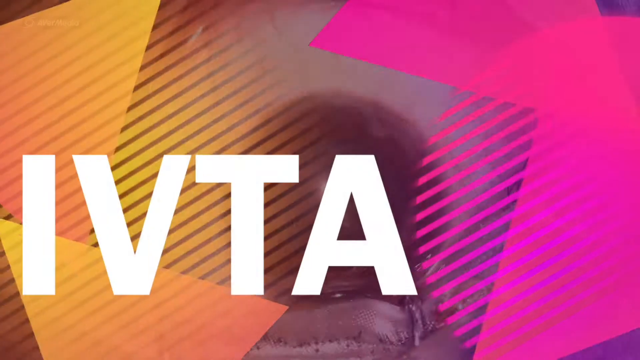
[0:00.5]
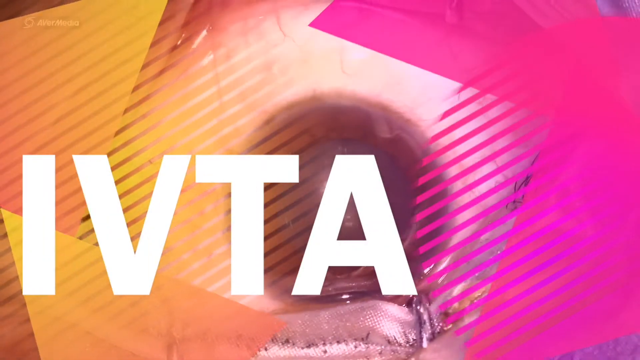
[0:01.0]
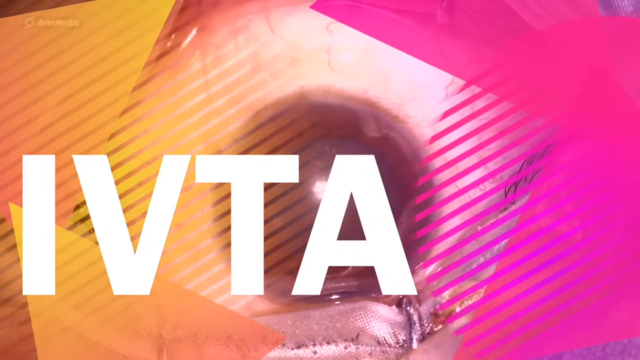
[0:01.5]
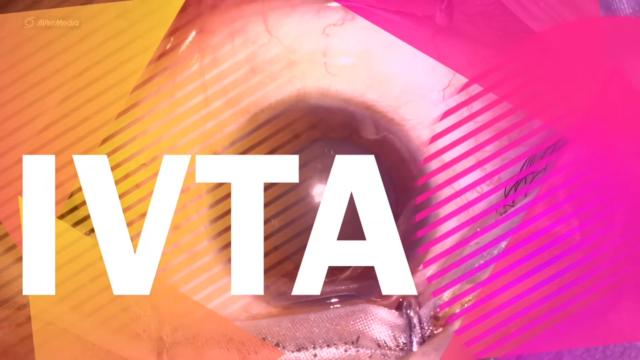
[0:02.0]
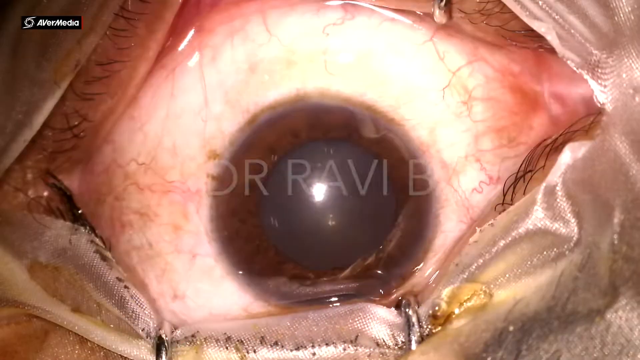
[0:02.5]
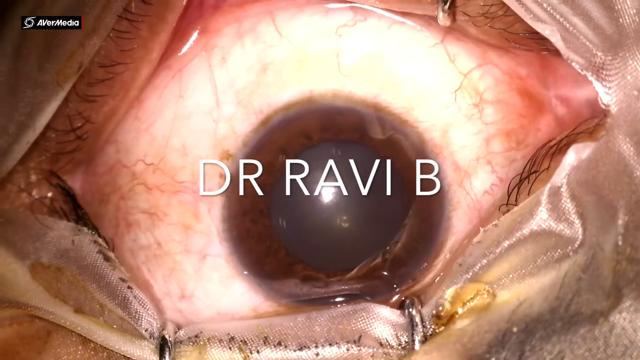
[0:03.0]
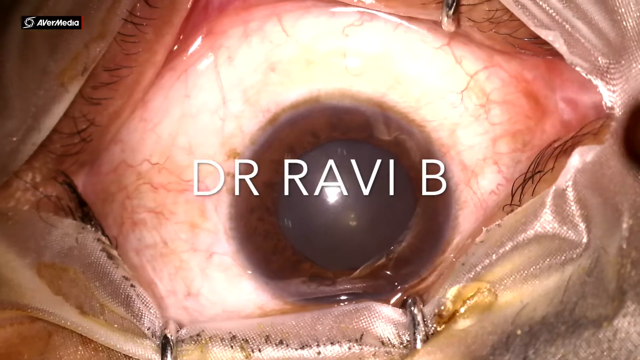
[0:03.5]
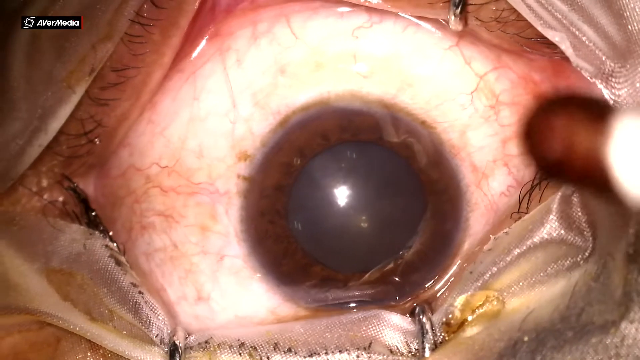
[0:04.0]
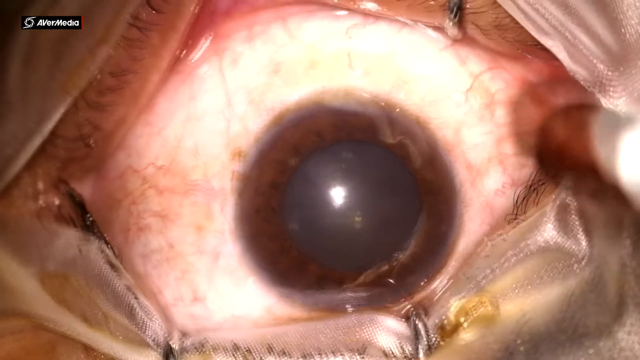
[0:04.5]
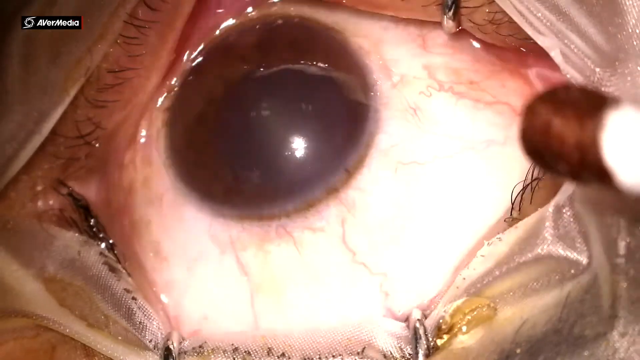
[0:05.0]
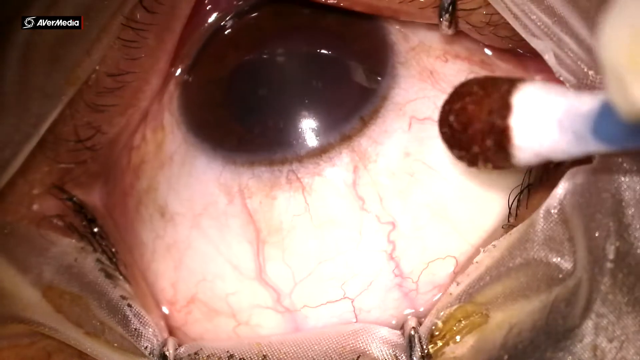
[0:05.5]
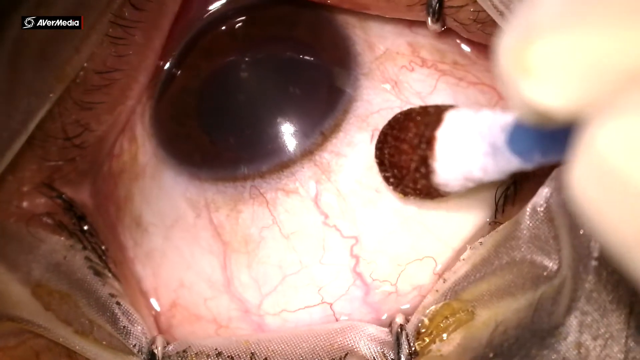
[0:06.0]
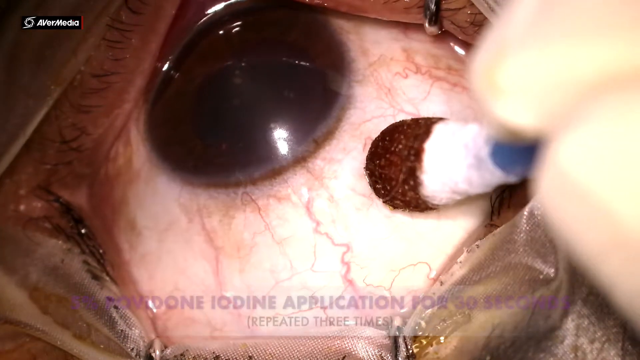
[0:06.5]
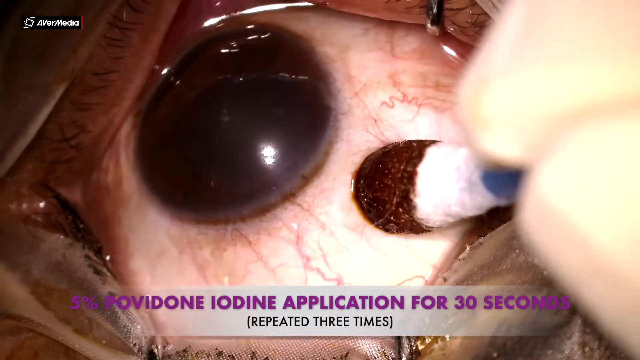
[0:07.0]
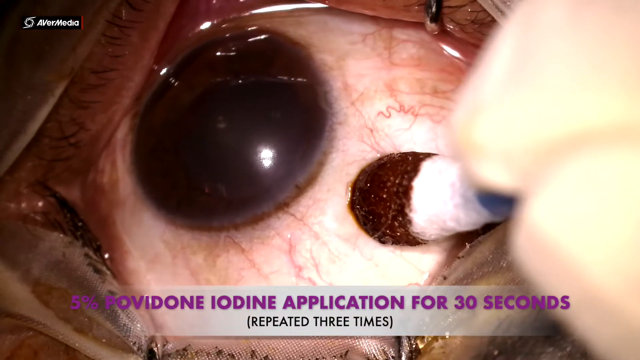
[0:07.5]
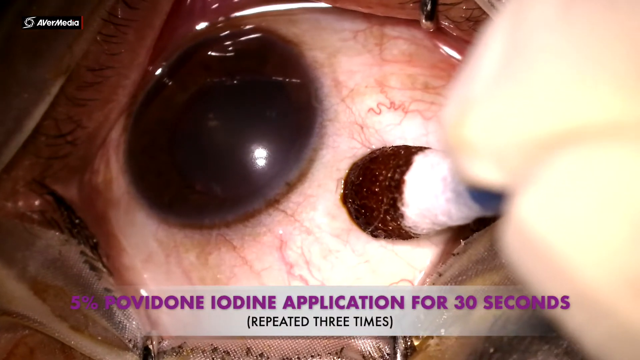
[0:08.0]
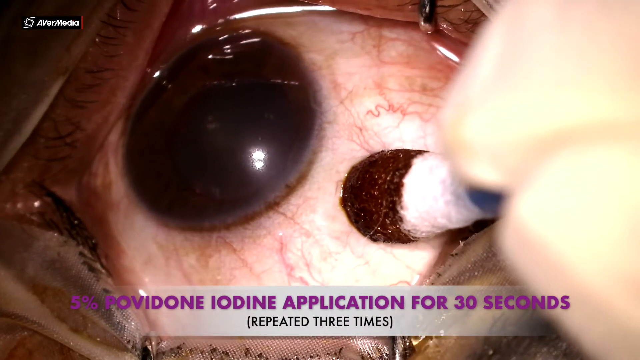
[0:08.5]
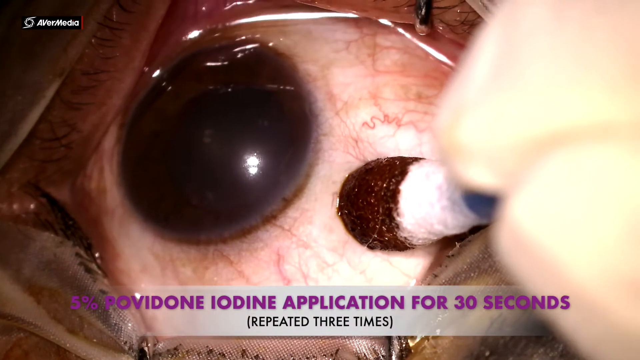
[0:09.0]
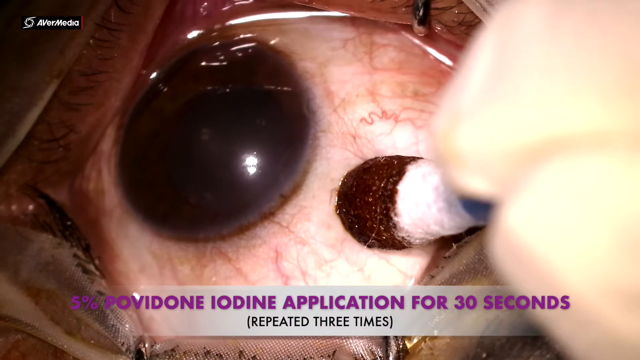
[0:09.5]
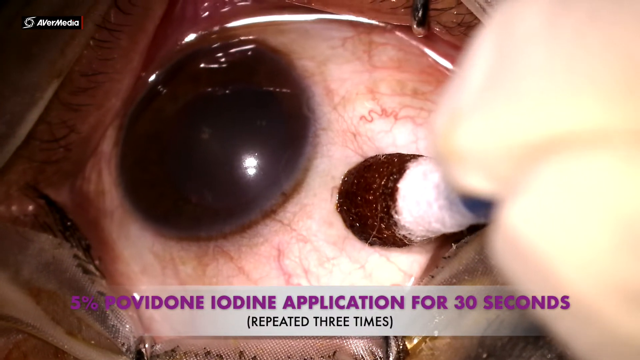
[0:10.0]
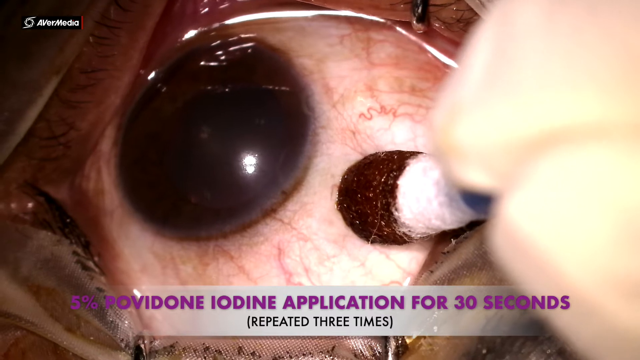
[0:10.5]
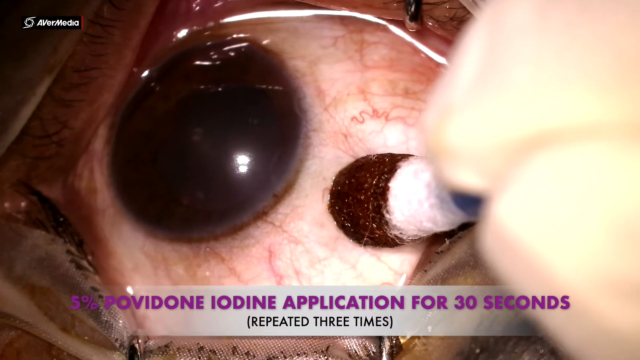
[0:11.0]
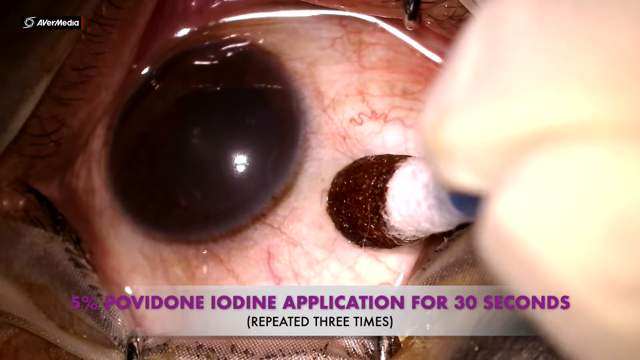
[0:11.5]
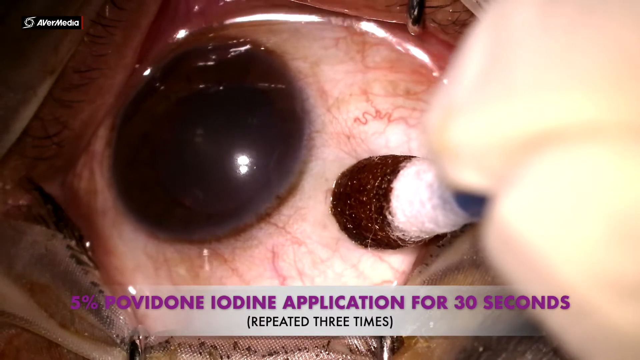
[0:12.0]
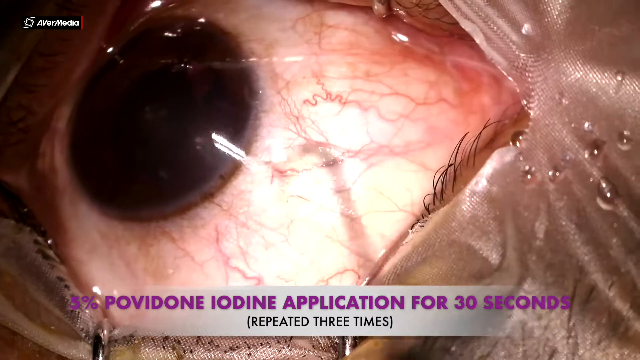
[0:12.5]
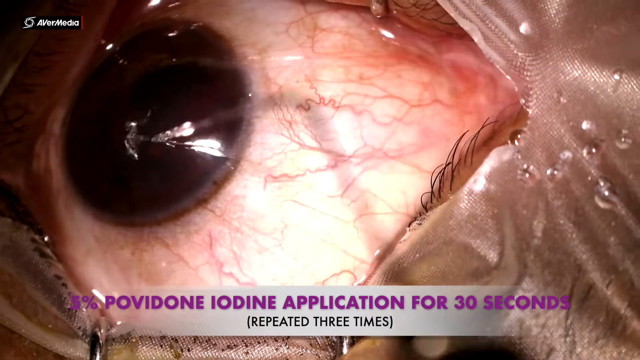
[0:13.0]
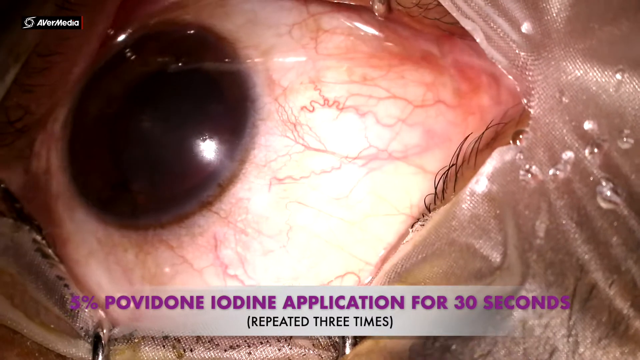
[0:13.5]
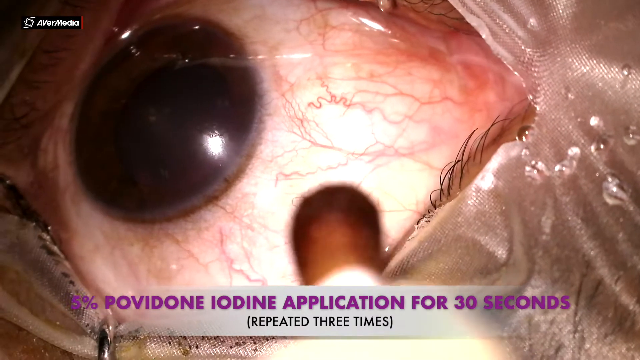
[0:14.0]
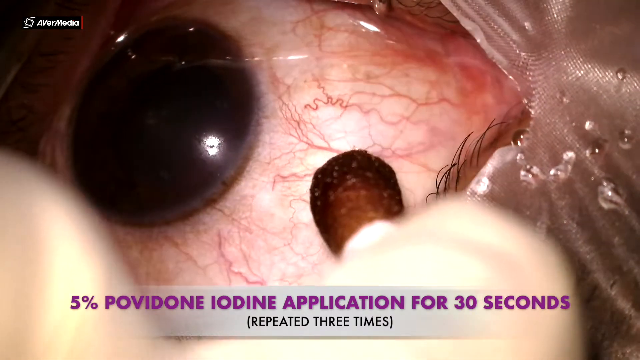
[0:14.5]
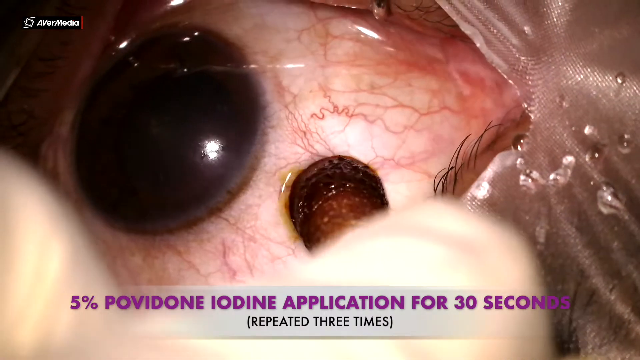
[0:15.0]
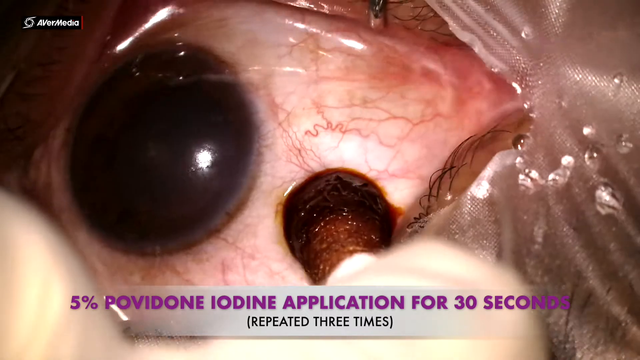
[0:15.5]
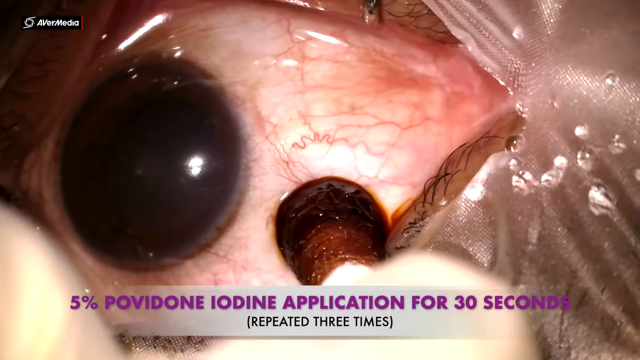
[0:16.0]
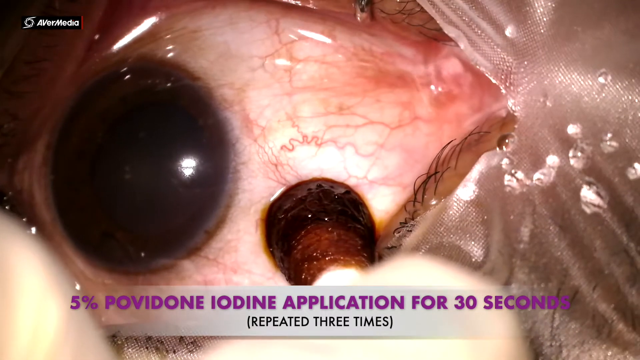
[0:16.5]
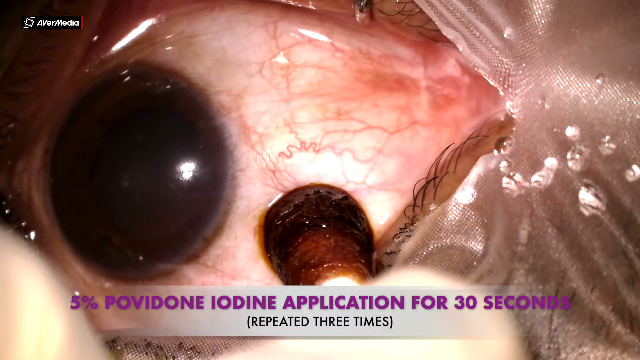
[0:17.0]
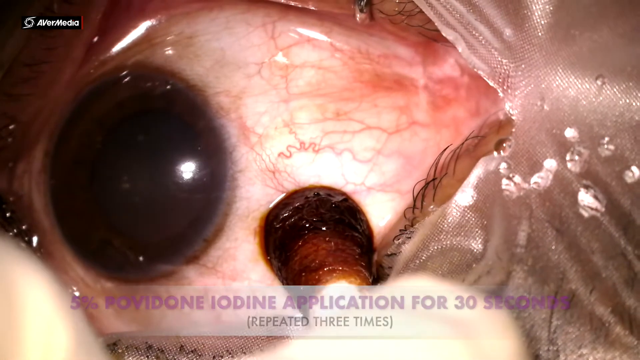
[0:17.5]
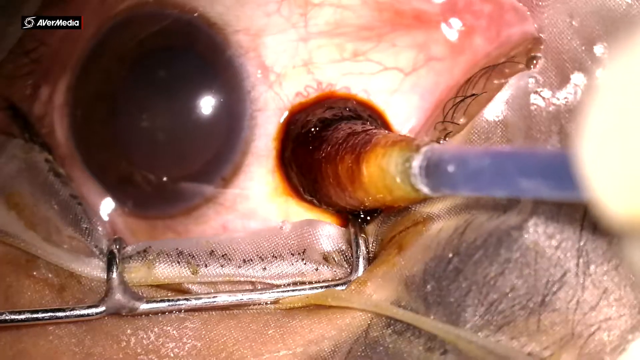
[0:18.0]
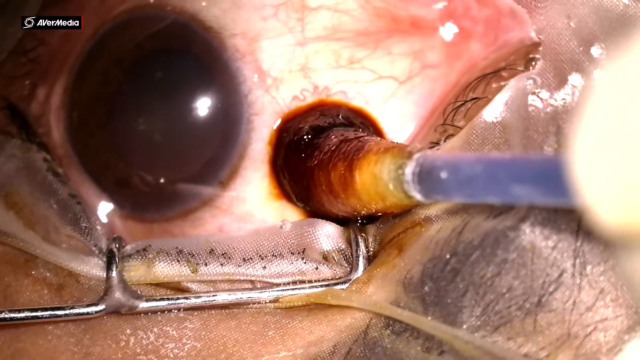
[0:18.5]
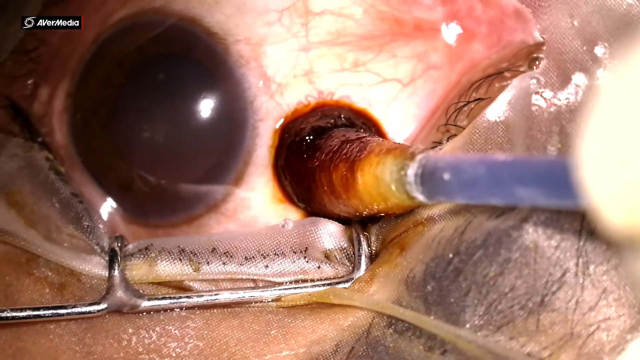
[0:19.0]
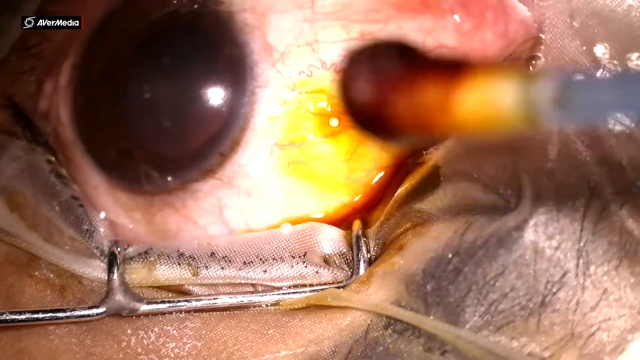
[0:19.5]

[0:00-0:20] An eye, apparently the eye of a real person, is held open by what look like needles. The whole eyeball is visible and wide open, still in the person's head. Something appears to be applied to the eye in what seems to be a procedure involving iodine: what looks like a Q-tip is put on the eye's surface. Text at the bottom reads "5% pov-iodine application" and indicates that it is done three times.